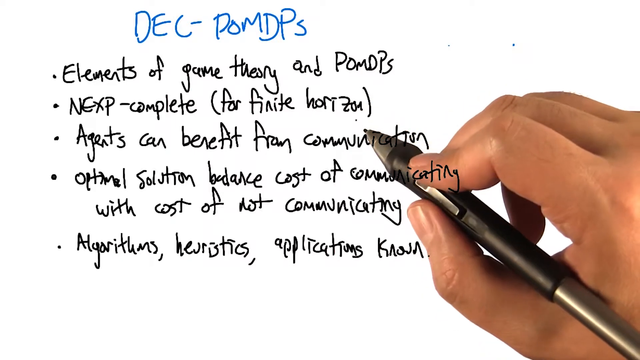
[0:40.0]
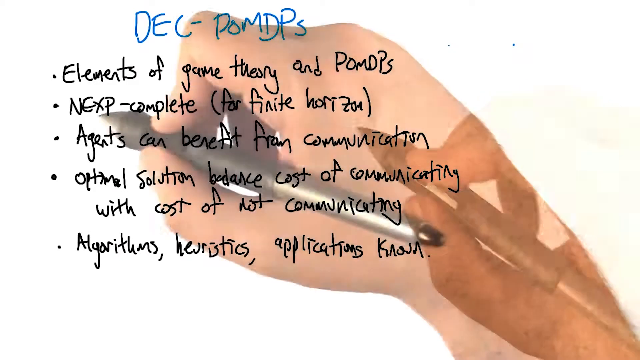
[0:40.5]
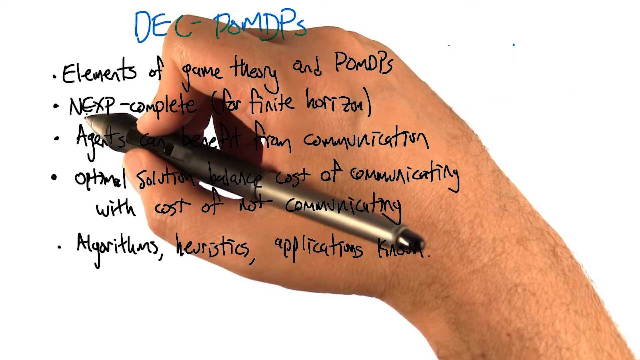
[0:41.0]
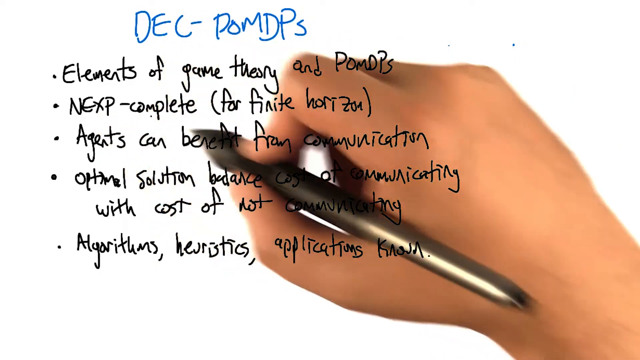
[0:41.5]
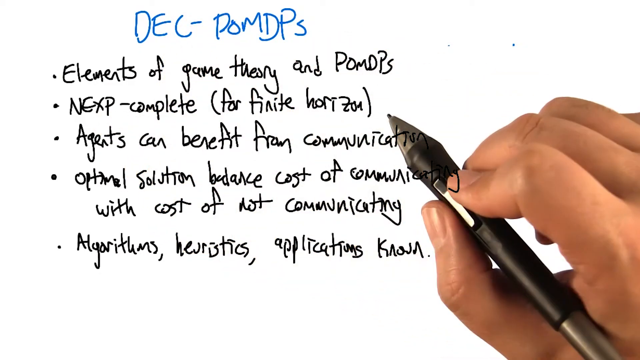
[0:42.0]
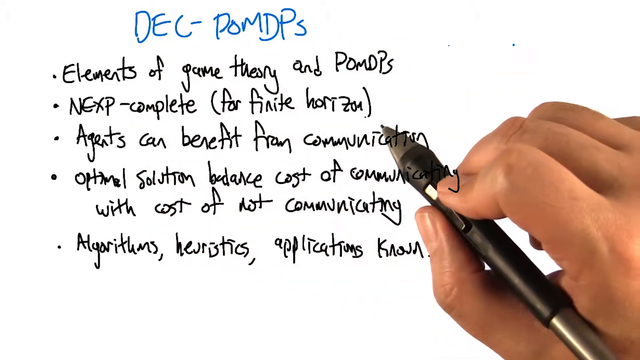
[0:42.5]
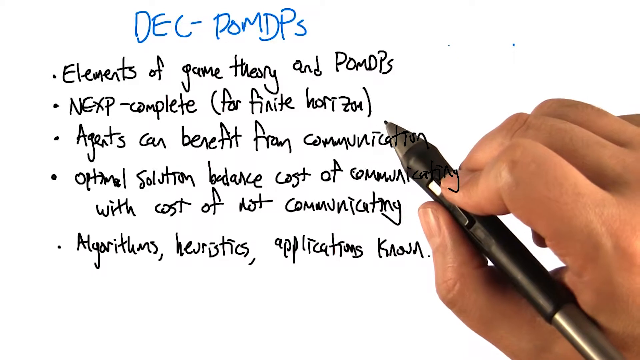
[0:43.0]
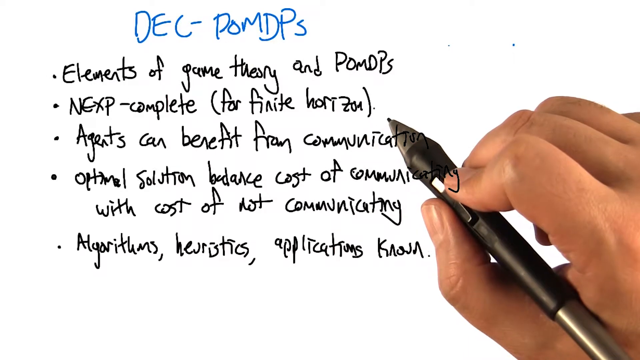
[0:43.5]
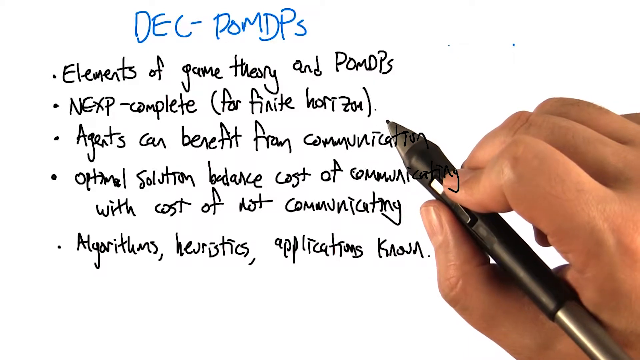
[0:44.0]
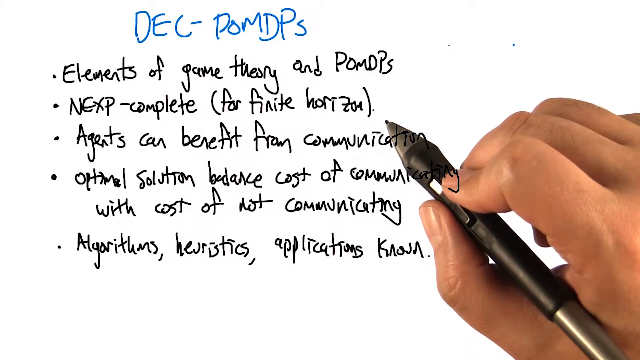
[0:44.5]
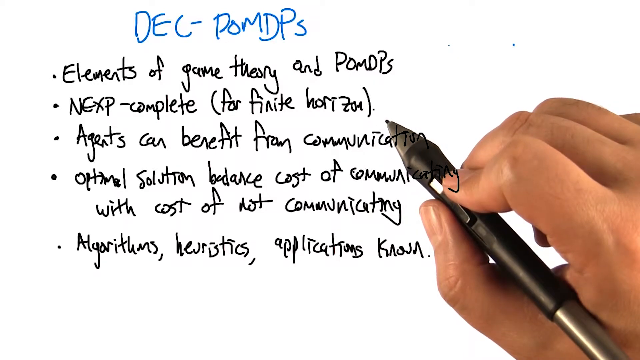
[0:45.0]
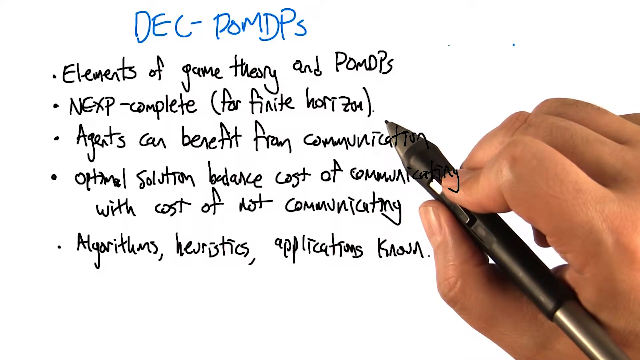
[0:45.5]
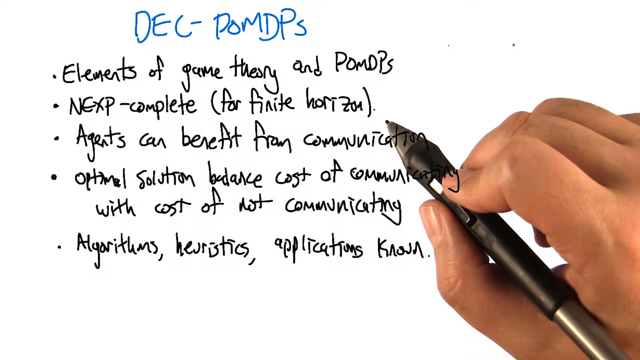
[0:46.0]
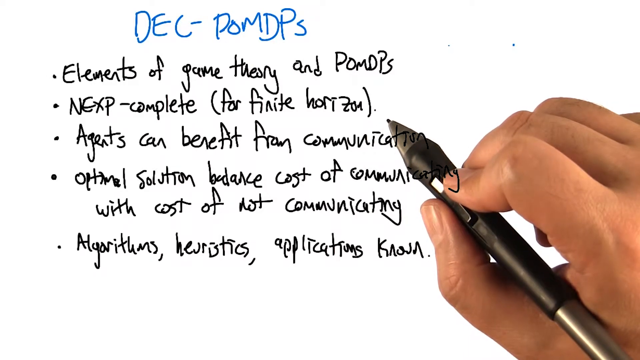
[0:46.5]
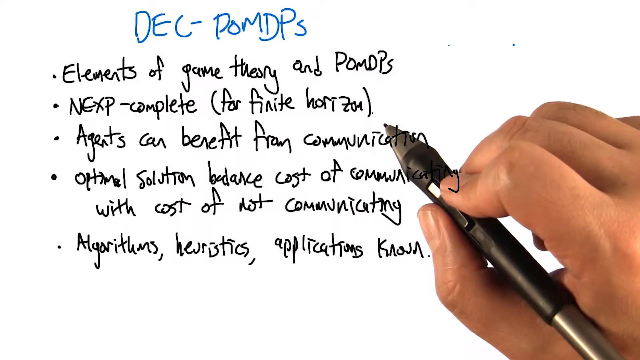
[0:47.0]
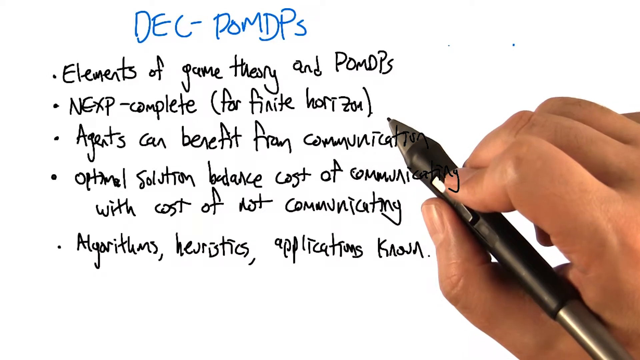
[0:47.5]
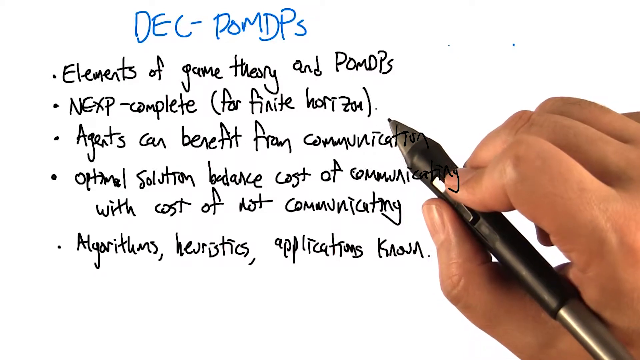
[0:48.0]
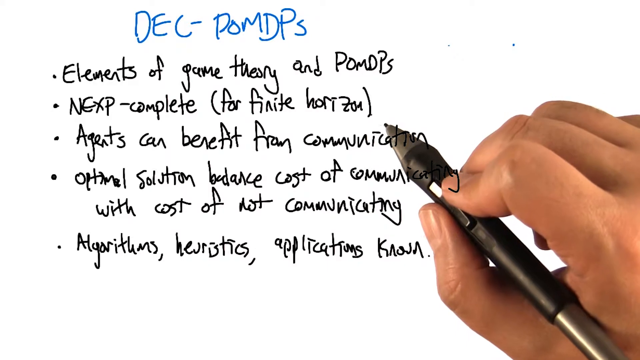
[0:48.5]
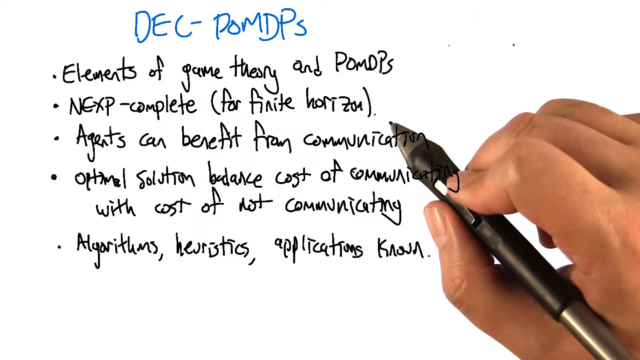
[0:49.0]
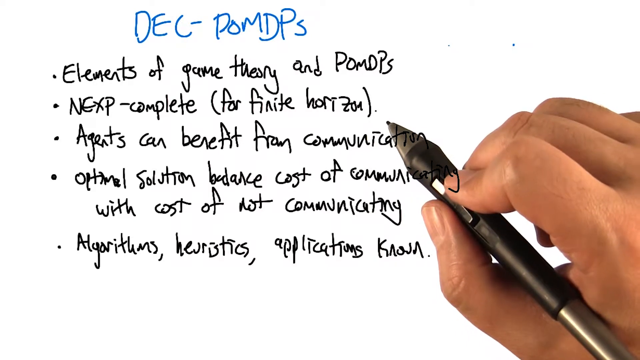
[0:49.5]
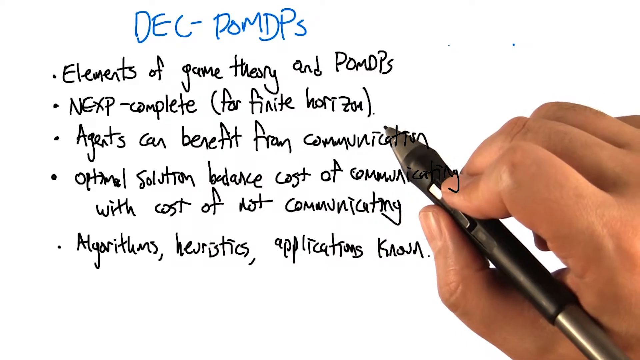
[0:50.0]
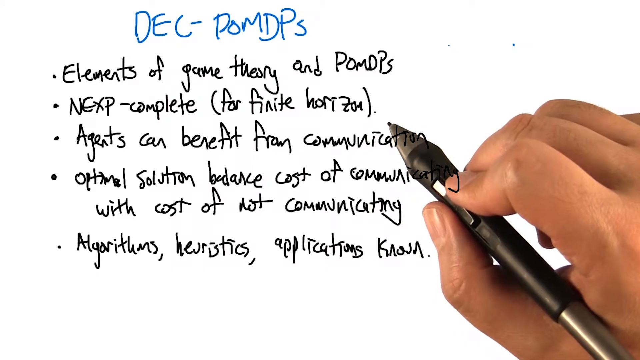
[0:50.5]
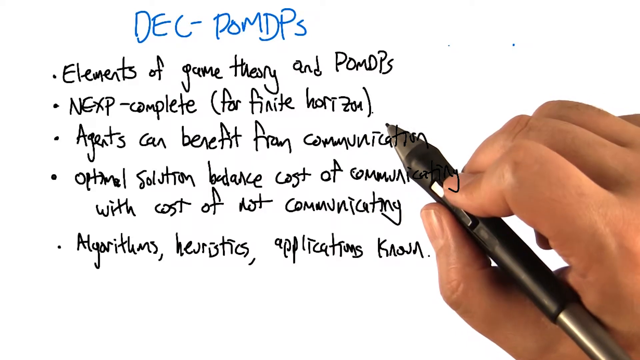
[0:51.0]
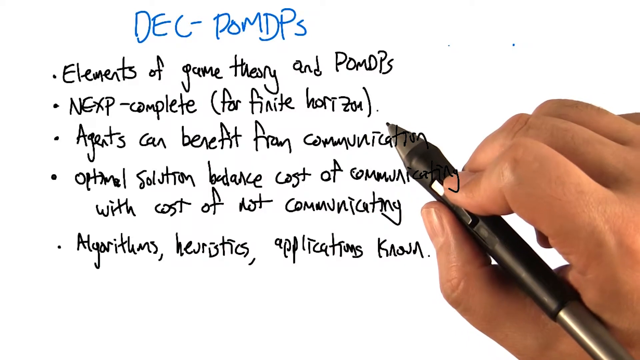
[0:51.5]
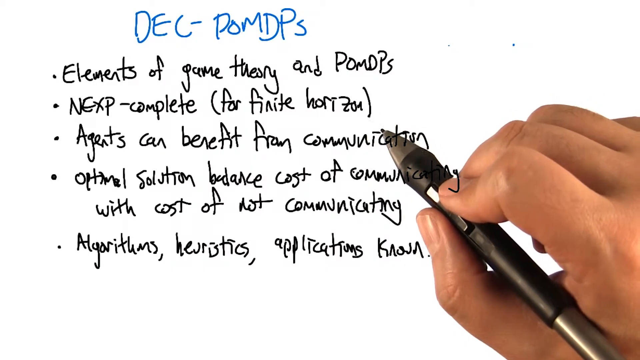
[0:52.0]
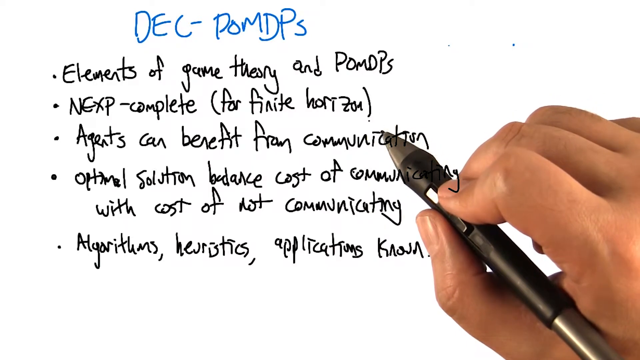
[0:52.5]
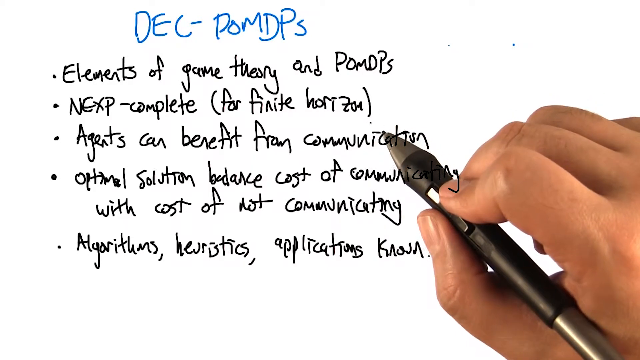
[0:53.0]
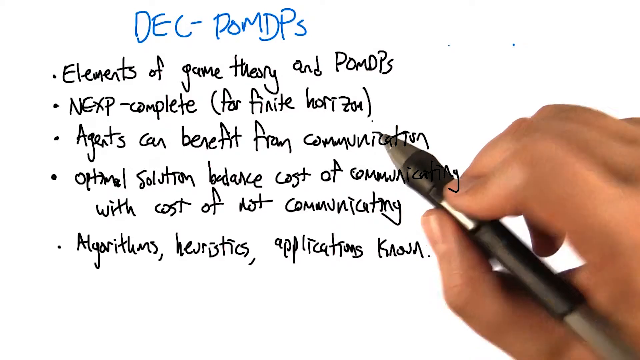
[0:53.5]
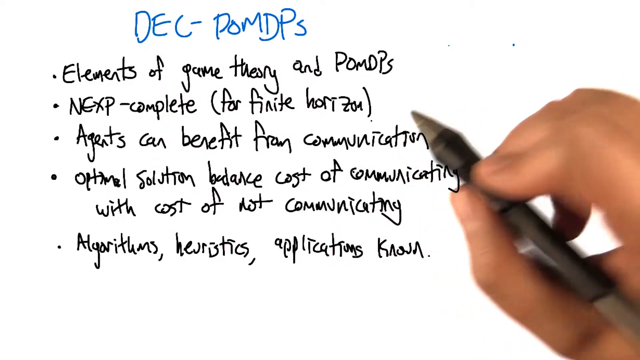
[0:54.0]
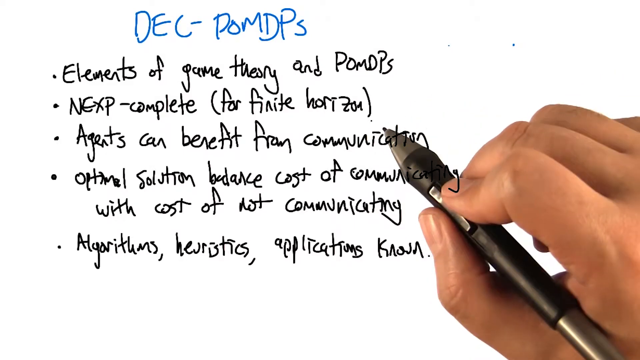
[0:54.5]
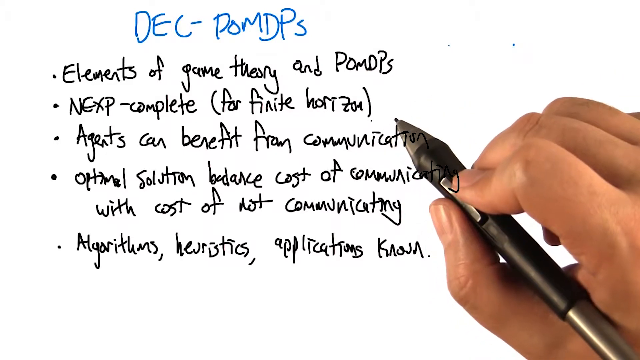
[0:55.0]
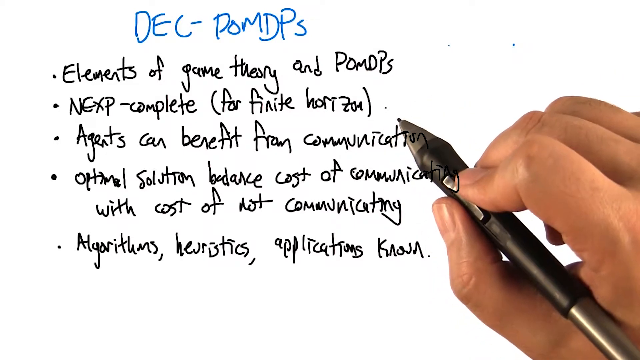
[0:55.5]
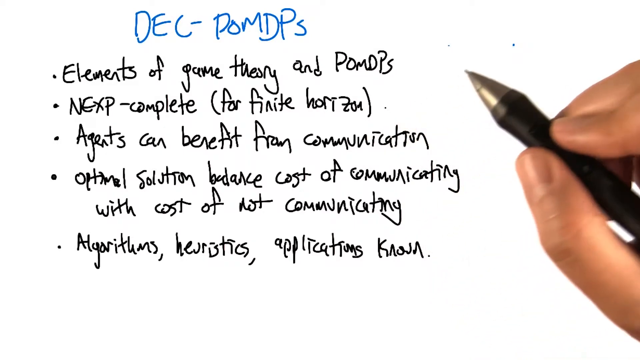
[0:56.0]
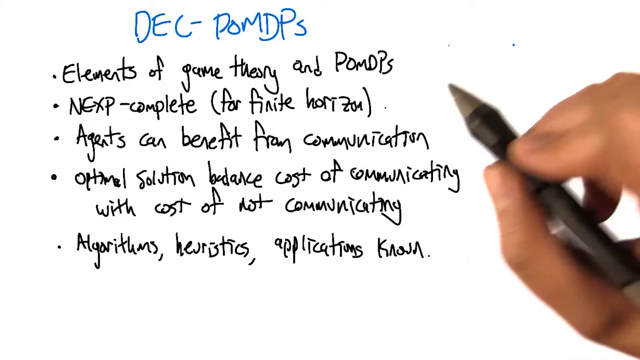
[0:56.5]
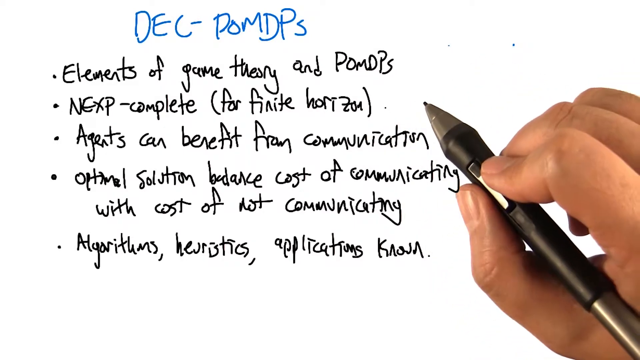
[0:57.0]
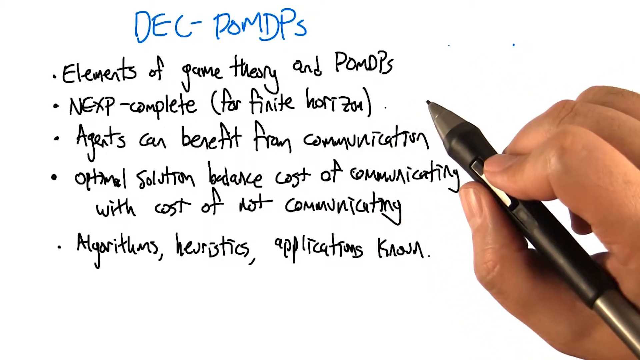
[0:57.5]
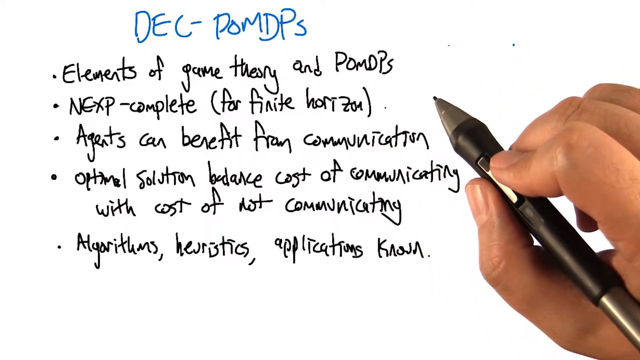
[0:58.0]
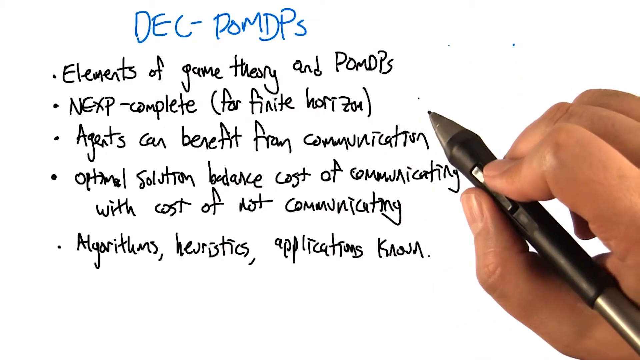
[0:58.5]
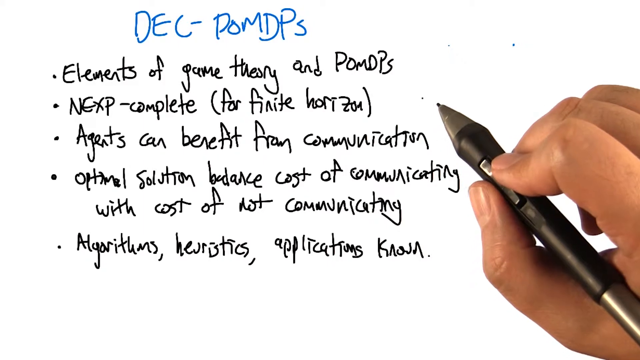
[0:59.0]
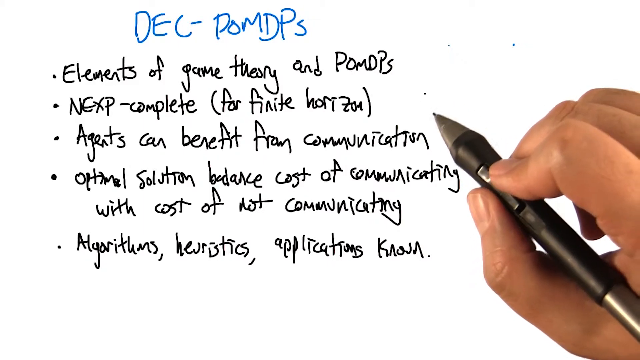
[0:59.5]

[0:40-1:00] The handwritten text looks like it is projected onto the screen, since the hand appears underneath the handwriting. There are about five points written in bullet form, handwritten rather than typed. The person seems to be emphasizing the linkage between the elements, moving point by point, now on point two and linking it with point three, which reads "Next, complete for finite horizon" and "agents can benefit from communication". He keeps referring back to the DEC POMDPS line. The same image stays on screen.